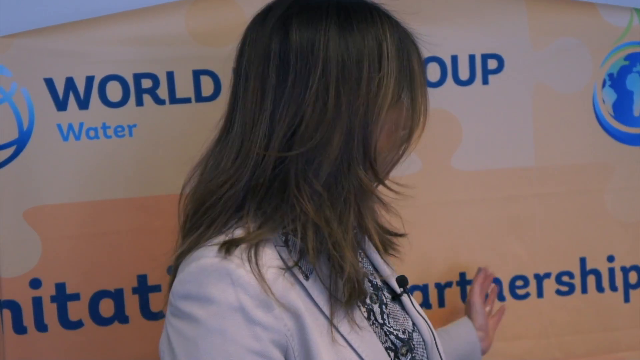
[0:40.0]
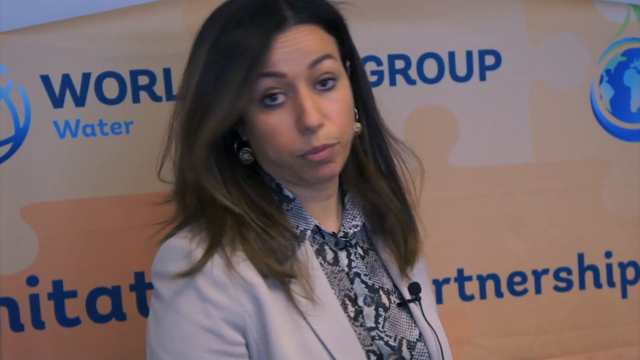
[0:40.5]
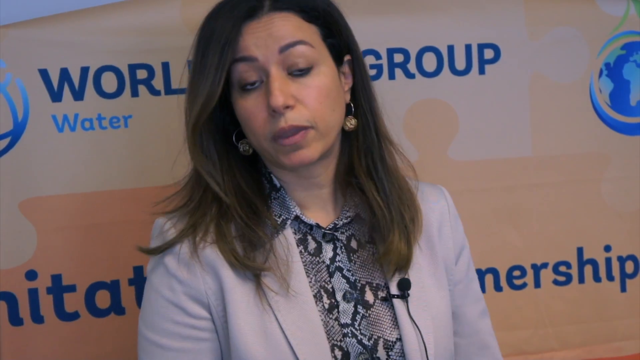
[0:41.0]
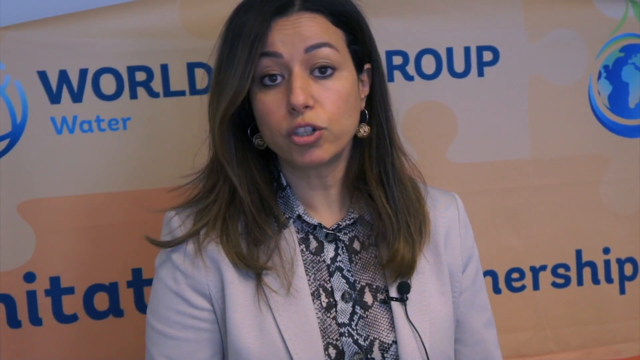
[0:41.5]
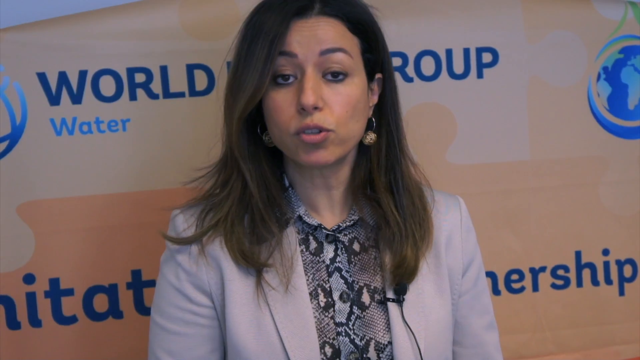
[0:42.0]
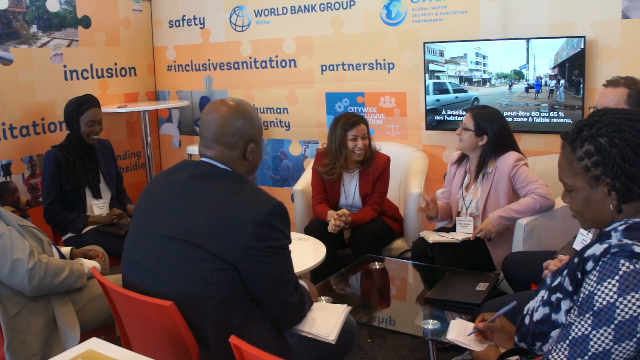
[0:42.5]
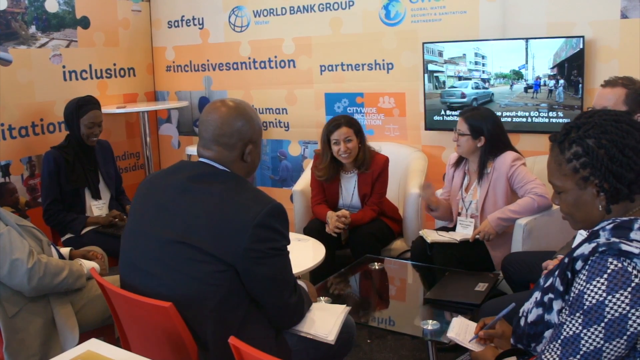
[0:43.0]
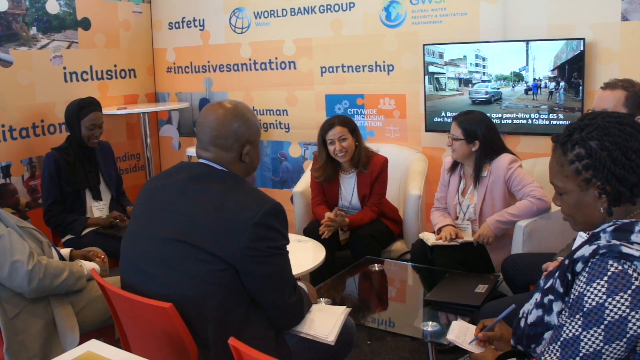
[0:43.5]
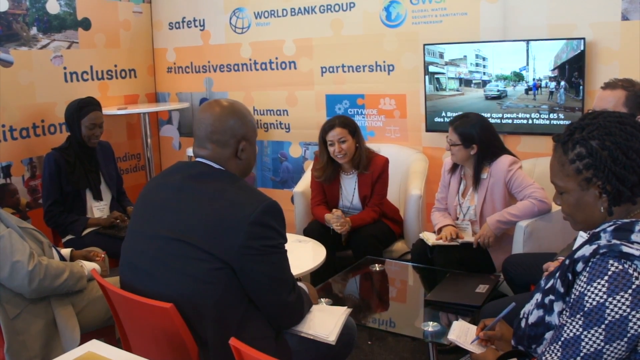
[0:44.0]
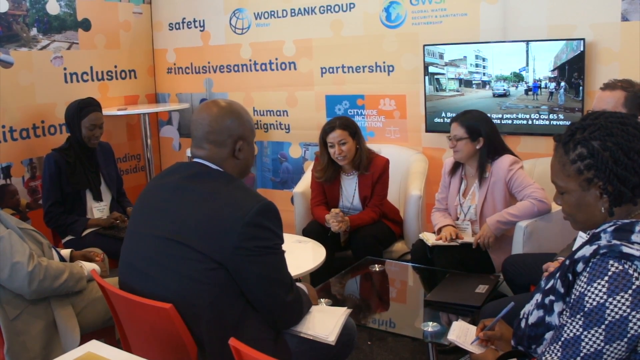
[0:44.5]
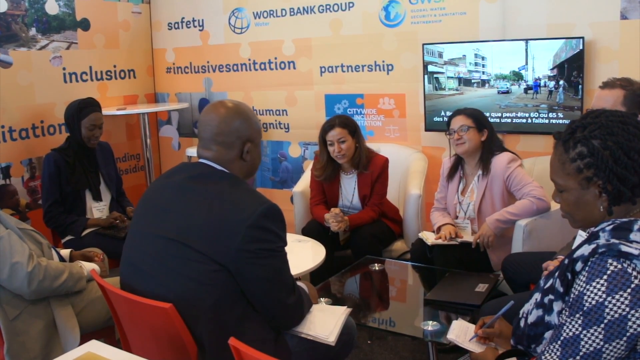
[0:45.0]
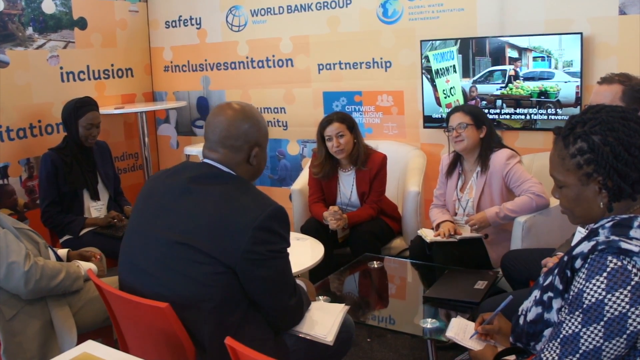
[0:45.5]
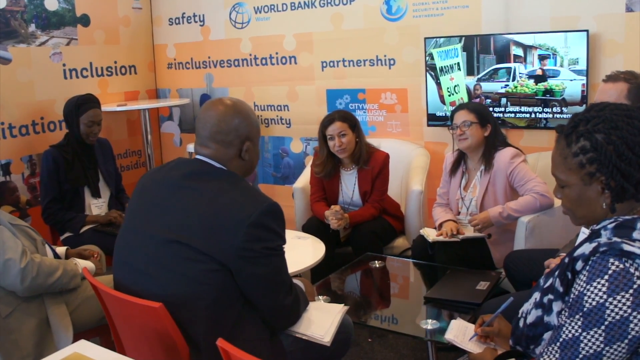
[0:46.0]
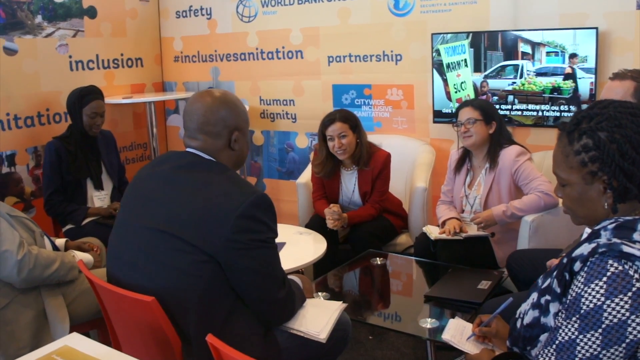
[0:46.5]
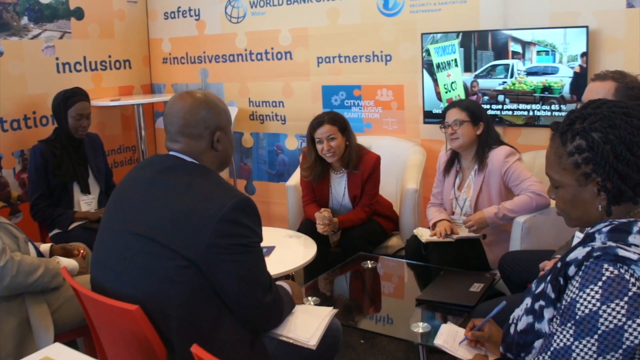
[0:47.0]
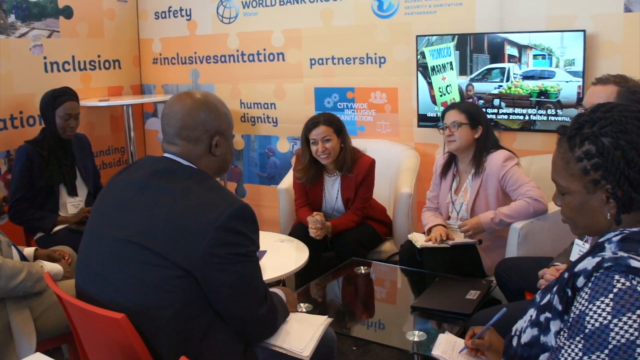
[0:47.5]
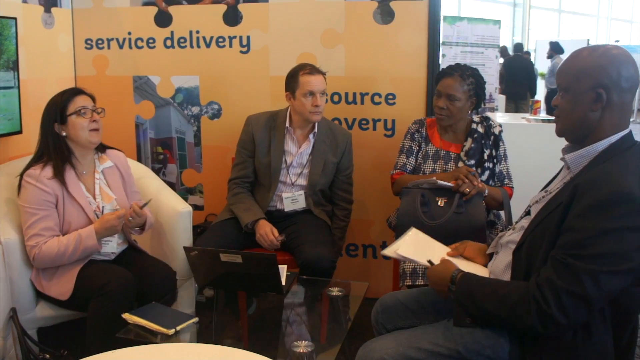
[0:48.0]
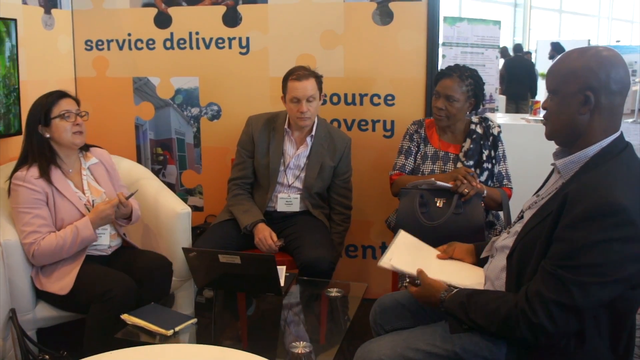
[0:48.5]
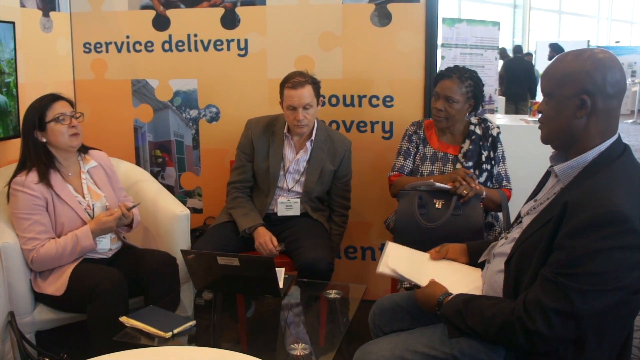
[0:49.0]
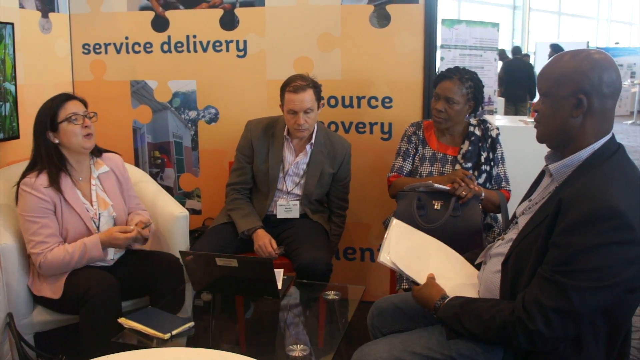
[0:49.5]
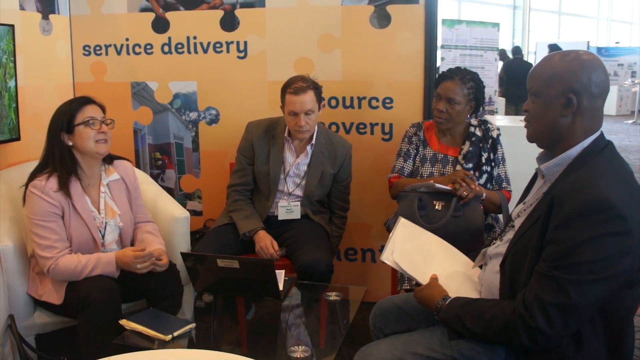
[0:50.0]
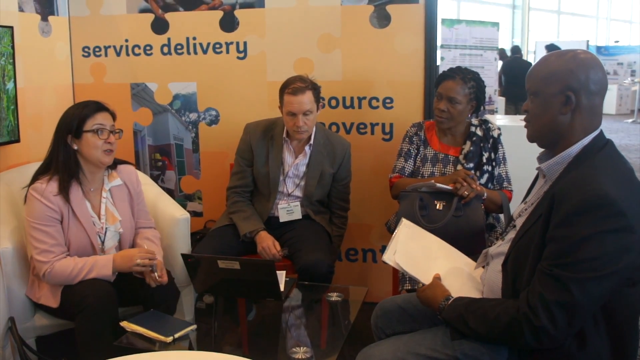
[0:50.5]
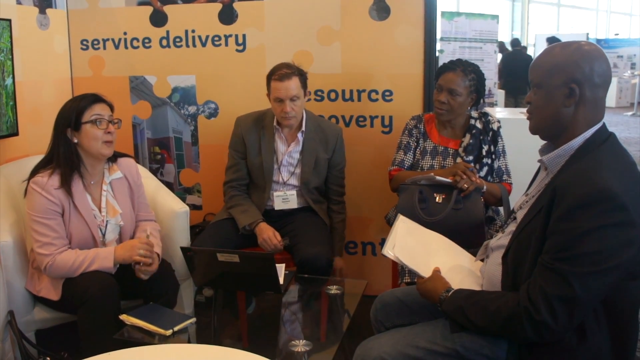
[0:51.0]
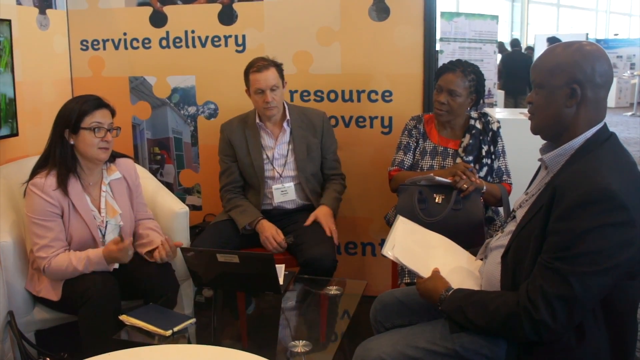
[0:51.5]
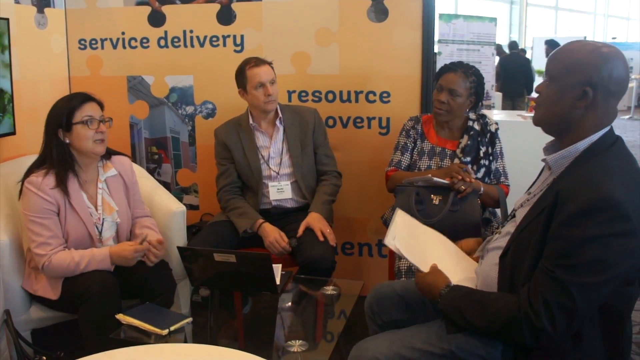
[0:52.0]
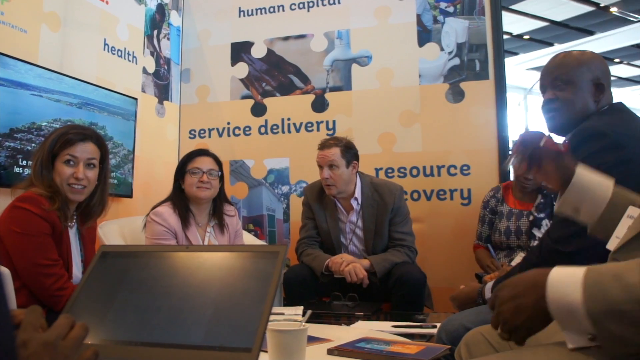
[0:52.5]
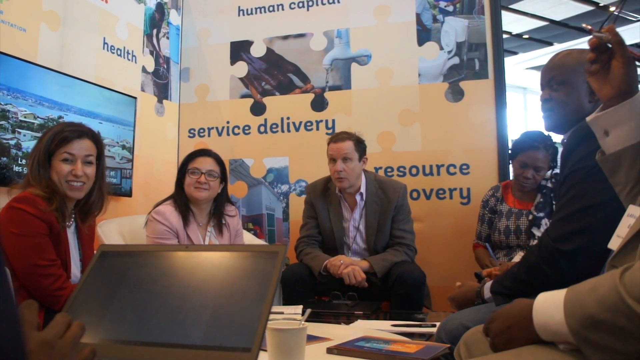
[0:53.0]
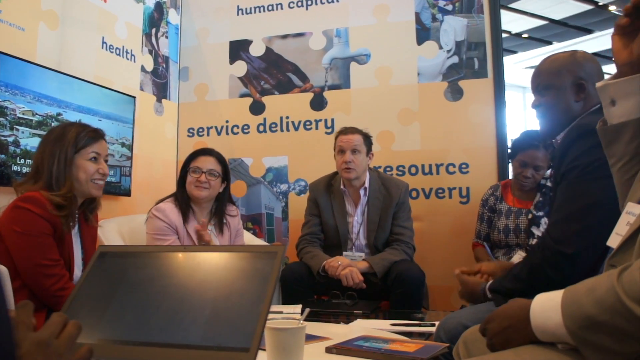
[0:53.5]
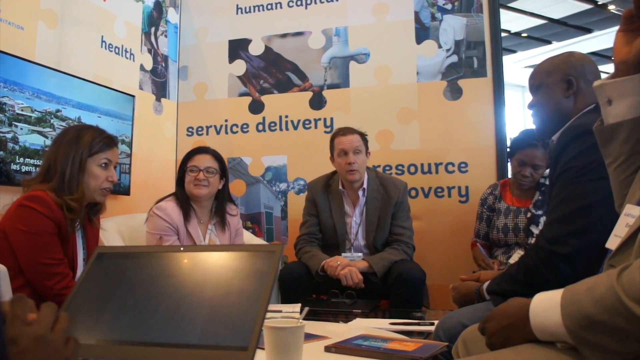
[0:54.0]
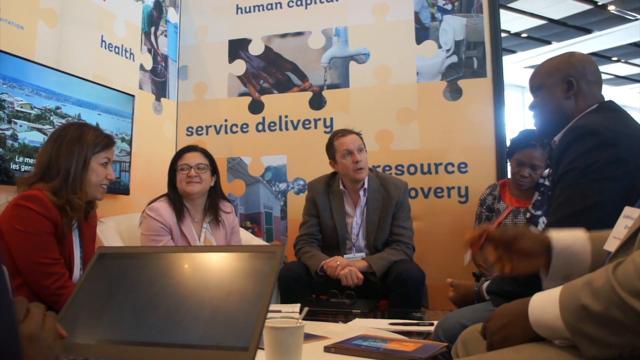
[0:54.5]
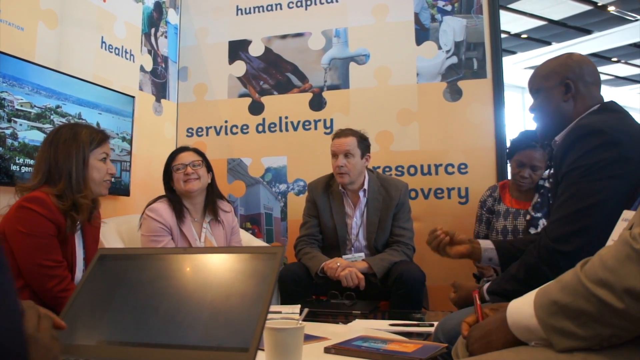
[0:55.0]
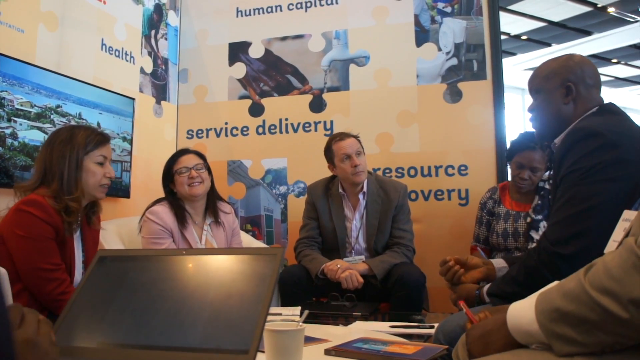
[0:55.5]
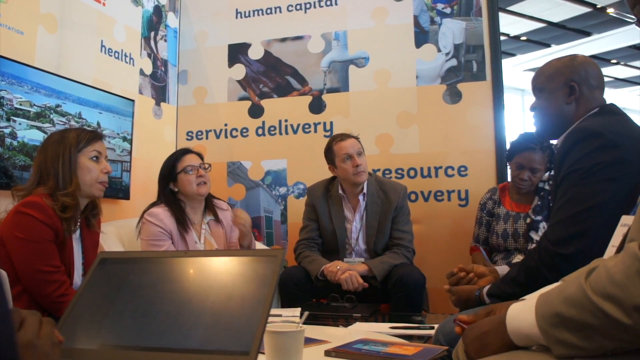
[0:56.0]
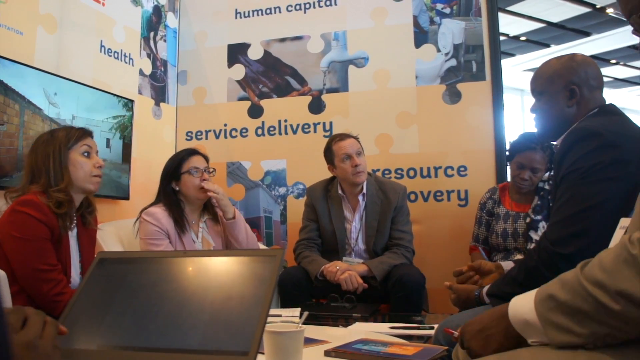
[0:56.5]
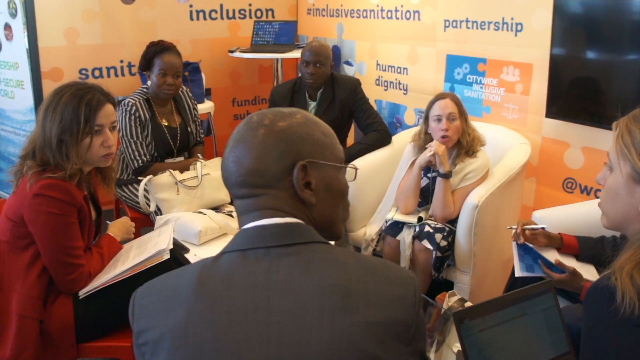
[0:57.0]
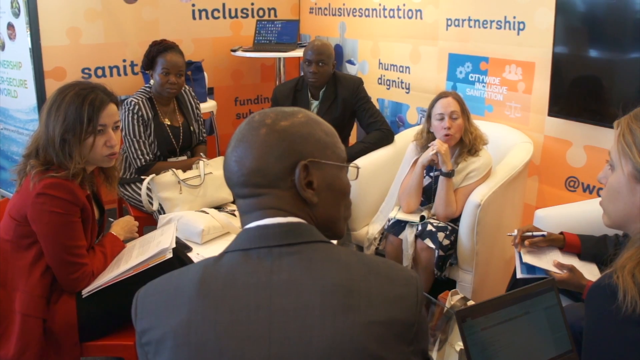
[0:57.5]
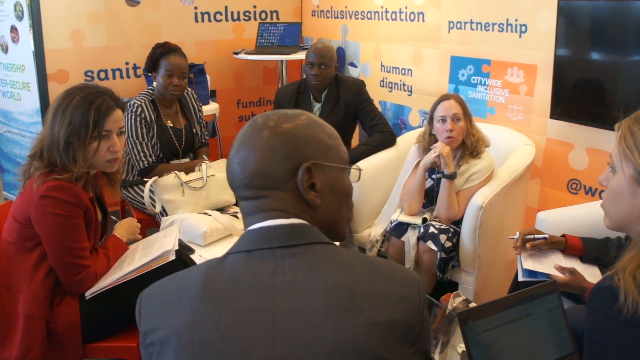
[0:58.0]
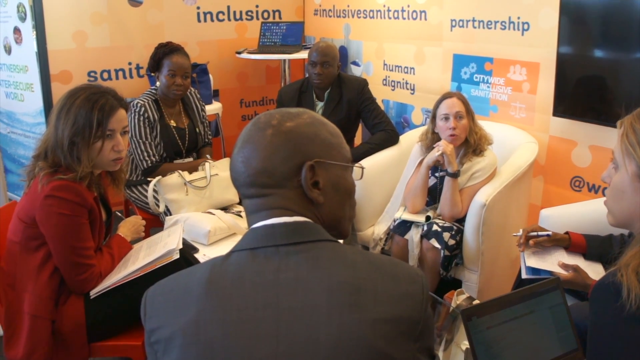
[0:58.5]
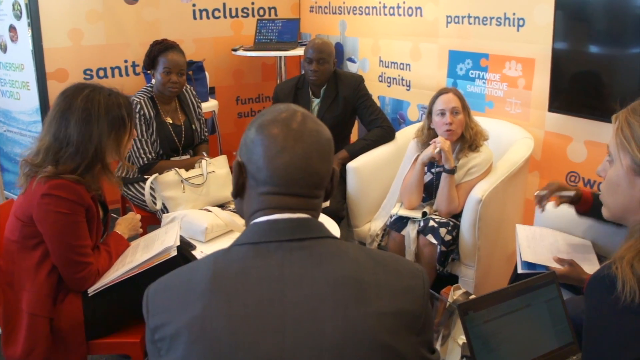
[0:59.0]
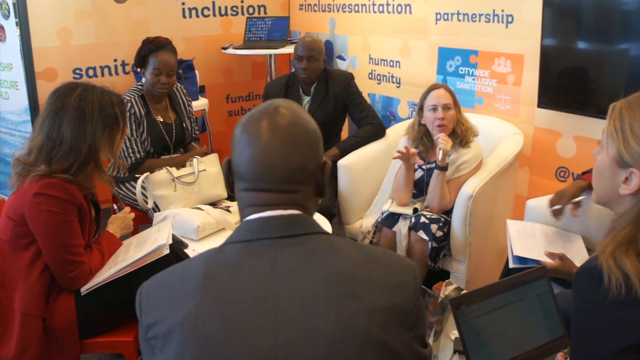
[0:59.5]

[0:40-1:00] Ayat Soliman continues her interview to the camera and turns around to point to the banner behind her, which has the signage of the organisation she works for. She turns back to the camera, appears to give a half smile, and looks focused and pleased about what she is sharing. The next shot shows a room where at least seven people sit on chairs having a discussion. One woman wears religious headwear. A woman sits in a red blazer with a white t-shirt underneath and black trousers. The woman sitting beside her wears a pink blazer with a white t-shirt, black trousers and glasses. The mood appears relaxed and friendly, and everyone is smiling as they speak. Another shot from a different angle shows the conversation appearing more serious, with no smiling and fixed expressions. A woman appears to be listening to the exchange; she looks concentrated and hunches over her bag as she leans in to listen. The next shot is more light-hearted: the woman in the red blazer turns and smiles at another member of the group. The scenes fluctuate between the group in serious conversation and more light-hearted chat.